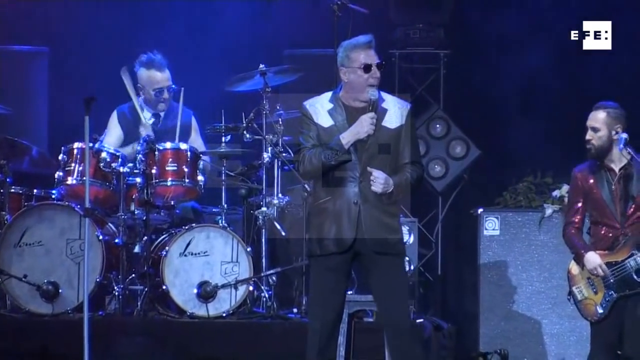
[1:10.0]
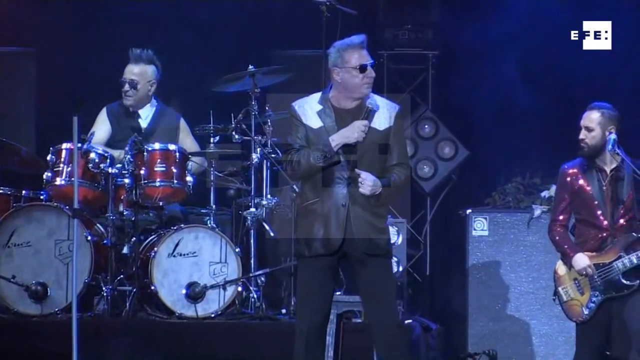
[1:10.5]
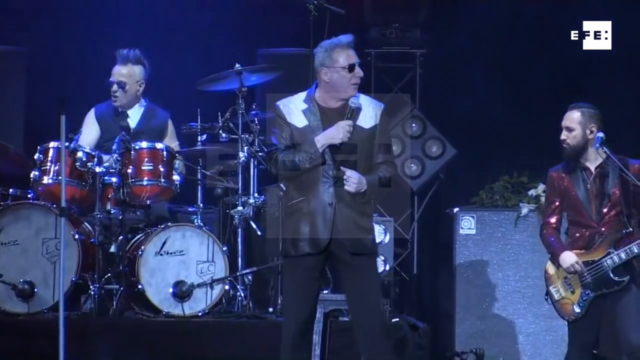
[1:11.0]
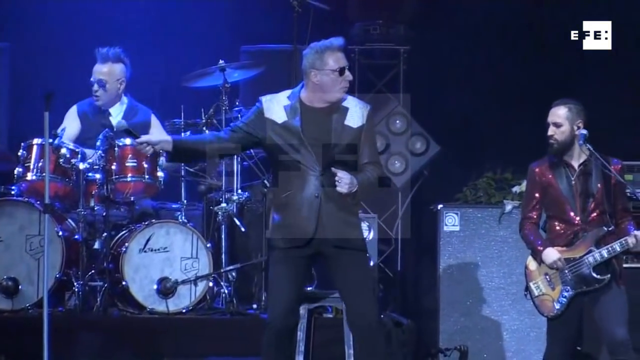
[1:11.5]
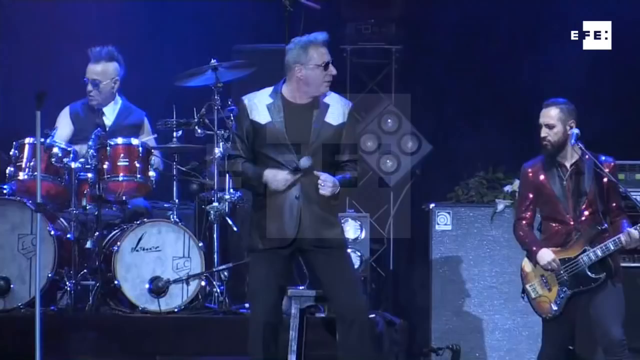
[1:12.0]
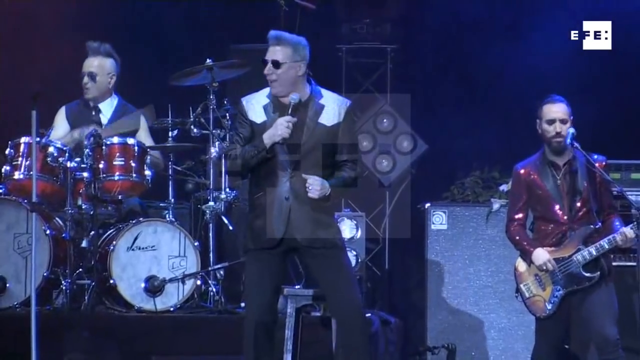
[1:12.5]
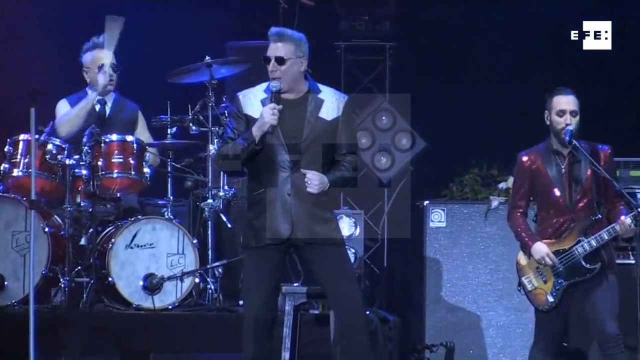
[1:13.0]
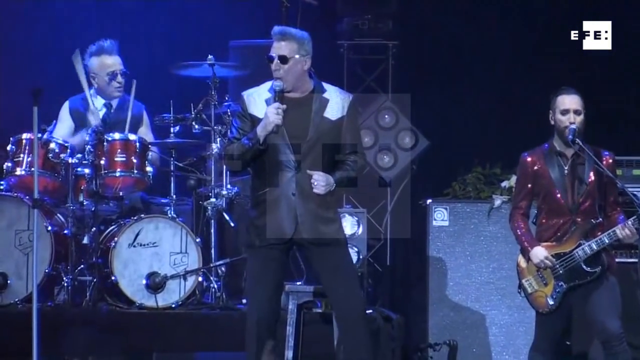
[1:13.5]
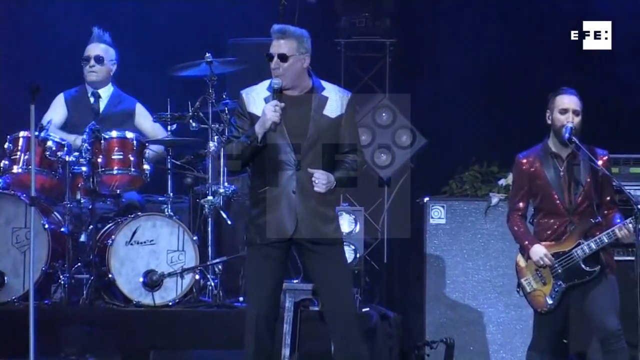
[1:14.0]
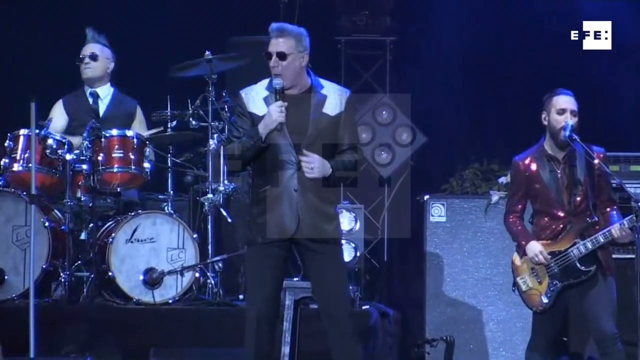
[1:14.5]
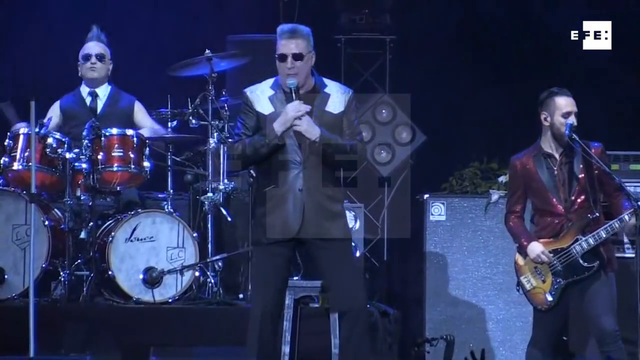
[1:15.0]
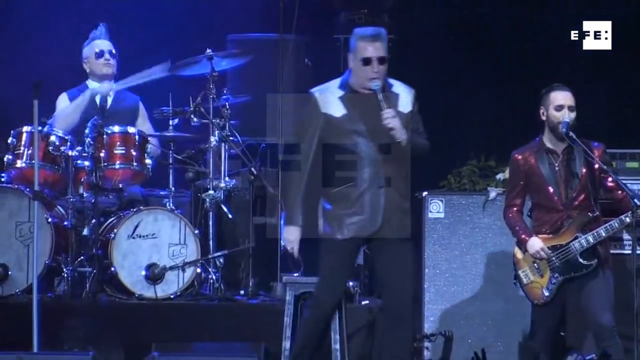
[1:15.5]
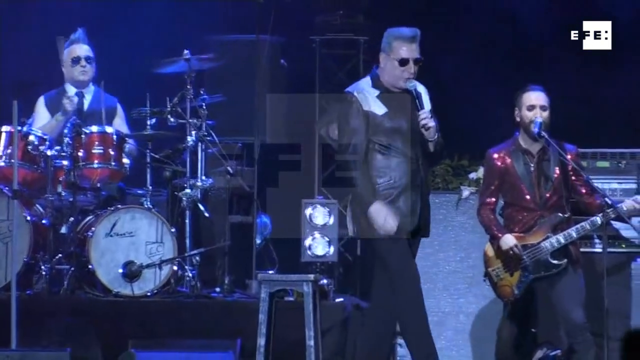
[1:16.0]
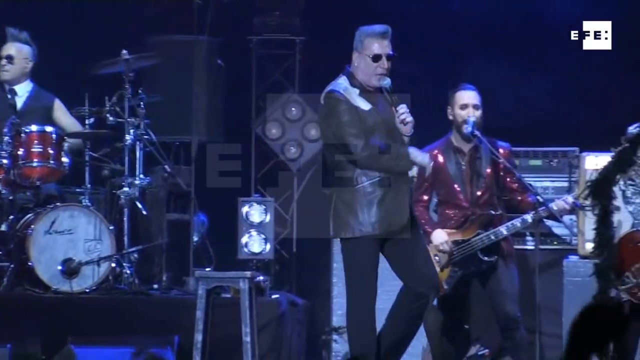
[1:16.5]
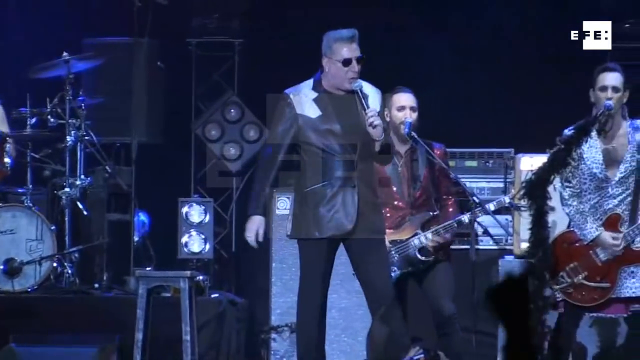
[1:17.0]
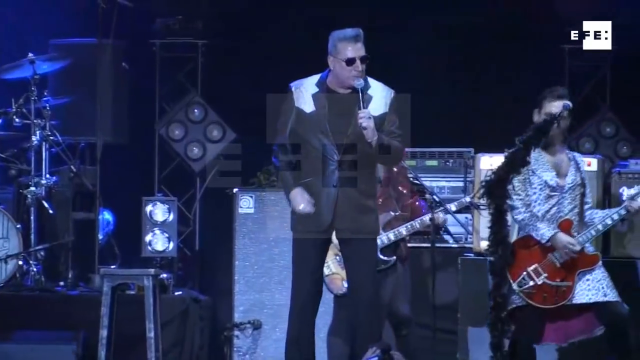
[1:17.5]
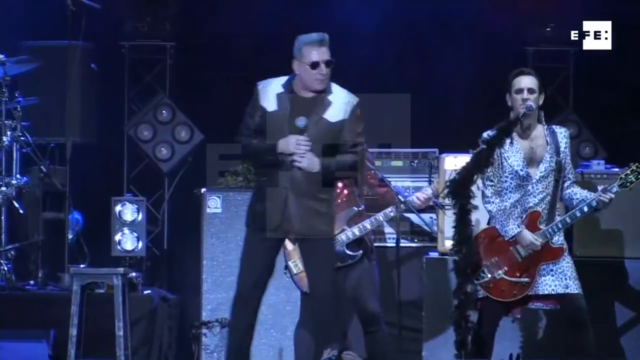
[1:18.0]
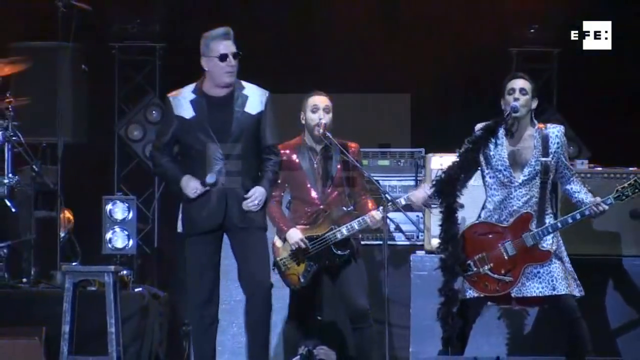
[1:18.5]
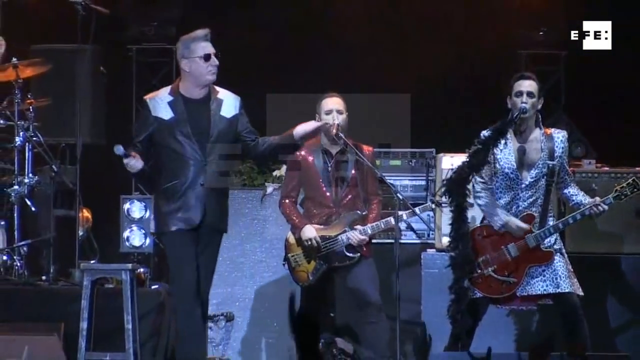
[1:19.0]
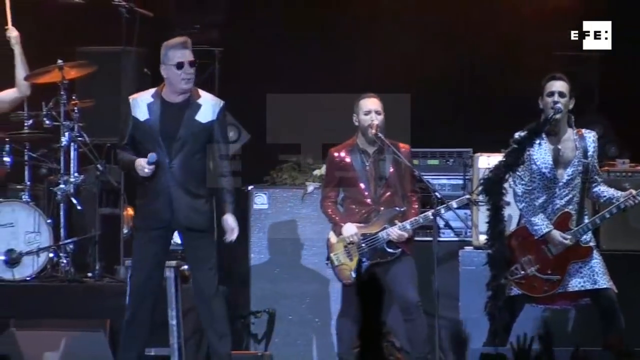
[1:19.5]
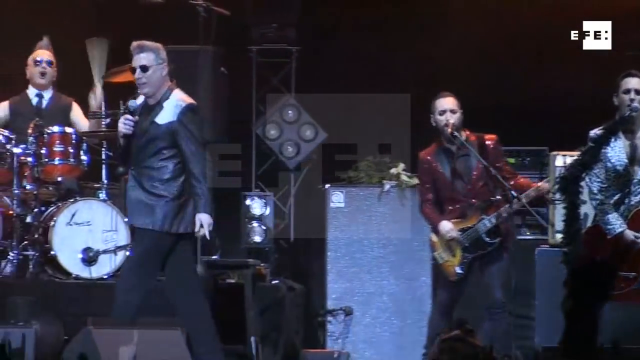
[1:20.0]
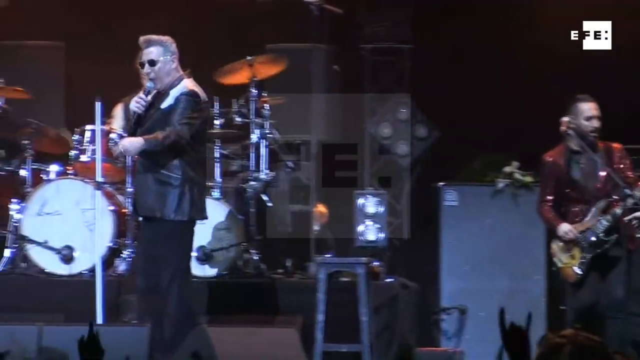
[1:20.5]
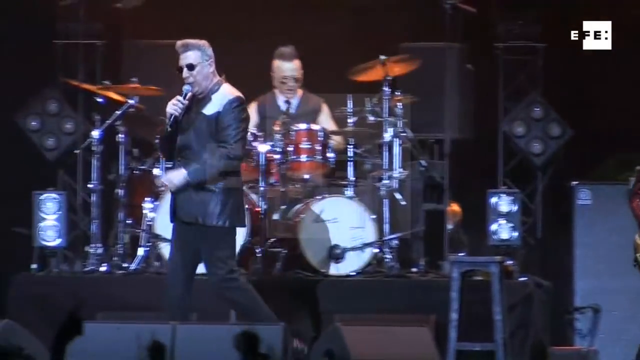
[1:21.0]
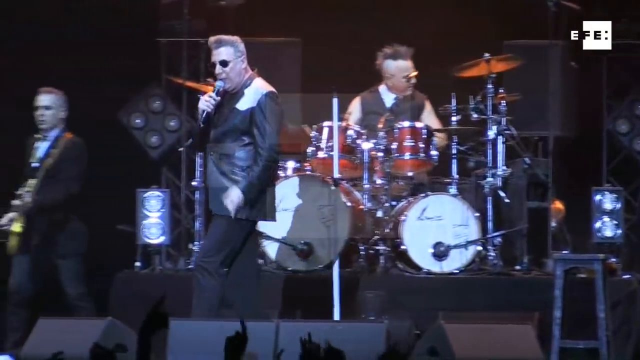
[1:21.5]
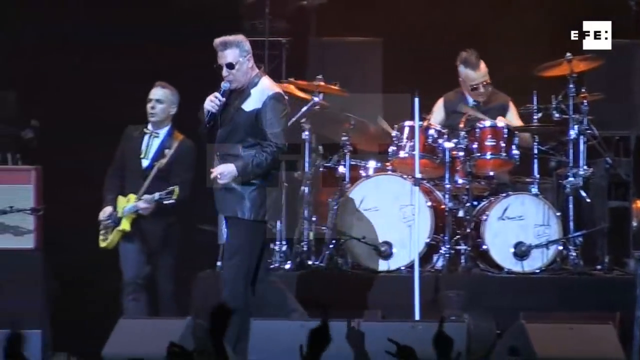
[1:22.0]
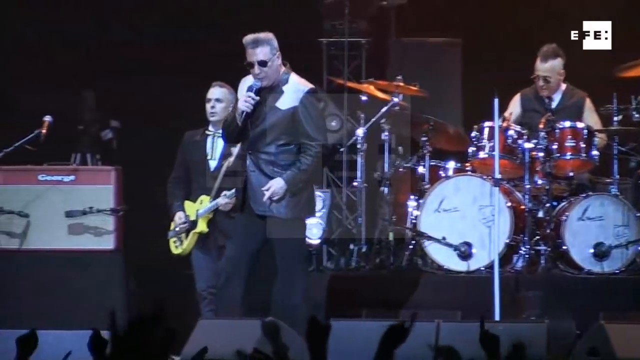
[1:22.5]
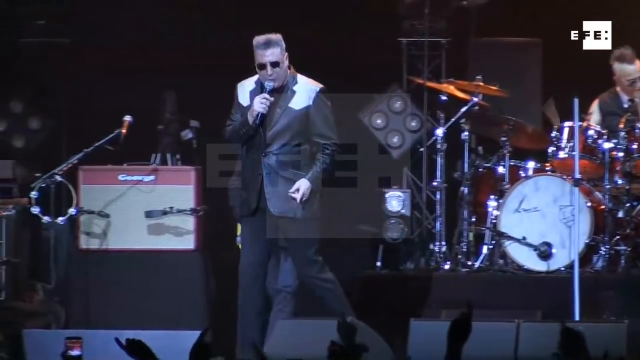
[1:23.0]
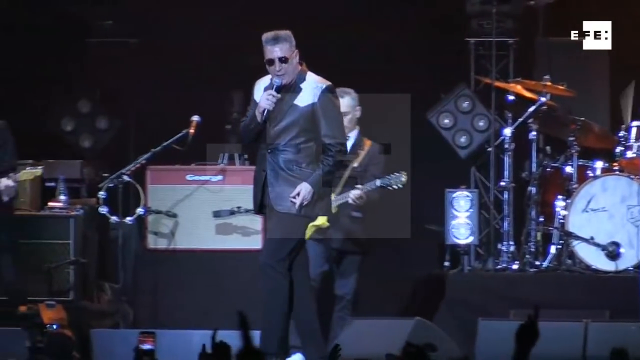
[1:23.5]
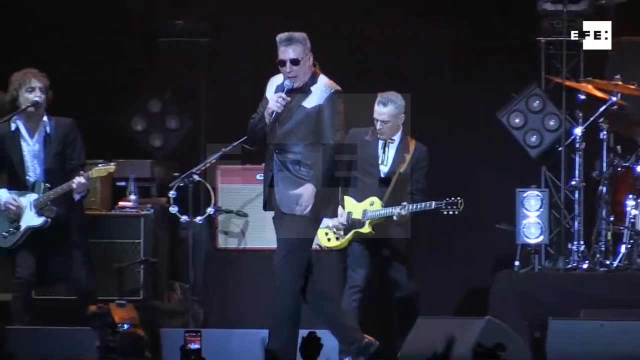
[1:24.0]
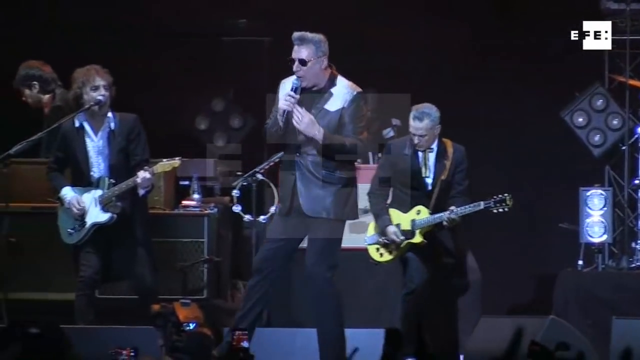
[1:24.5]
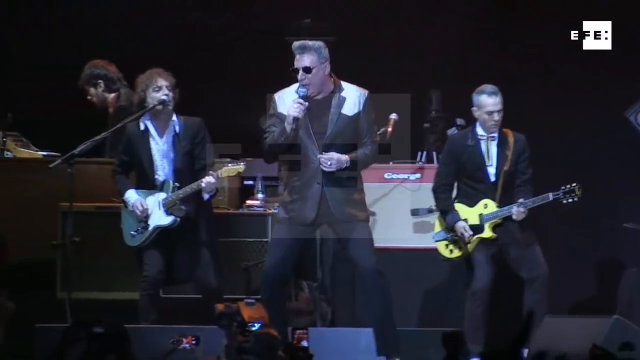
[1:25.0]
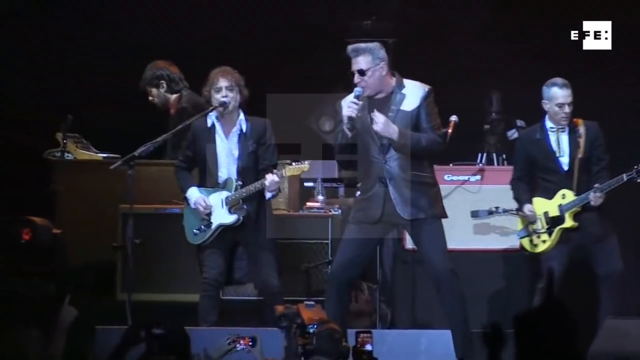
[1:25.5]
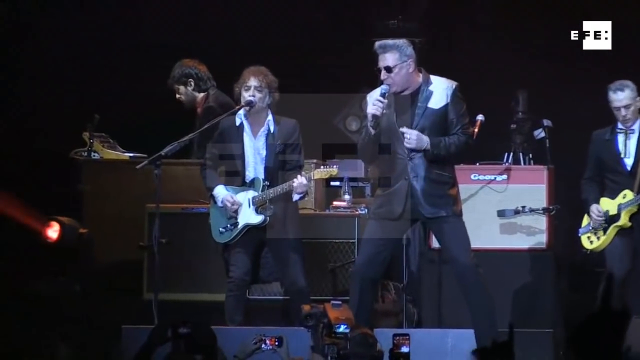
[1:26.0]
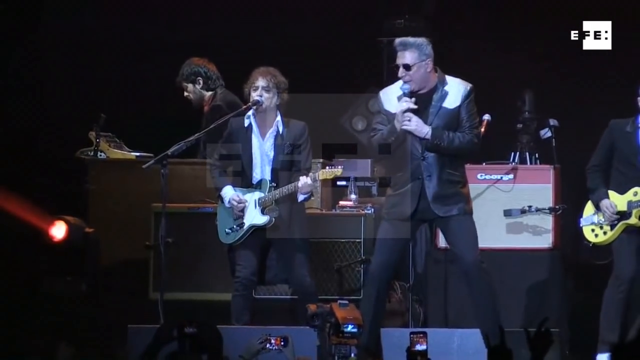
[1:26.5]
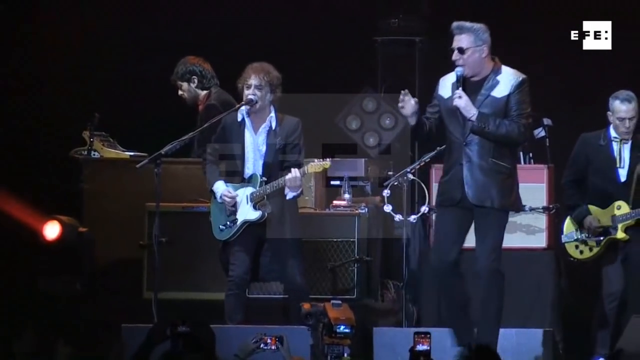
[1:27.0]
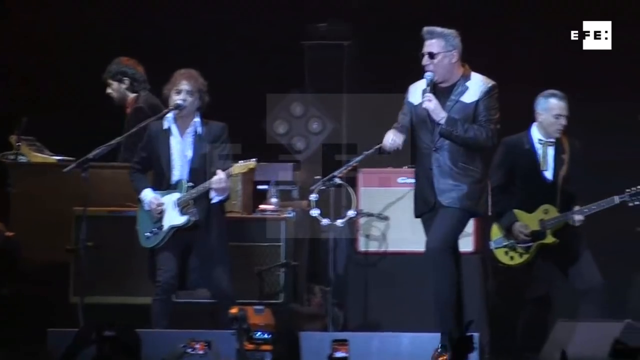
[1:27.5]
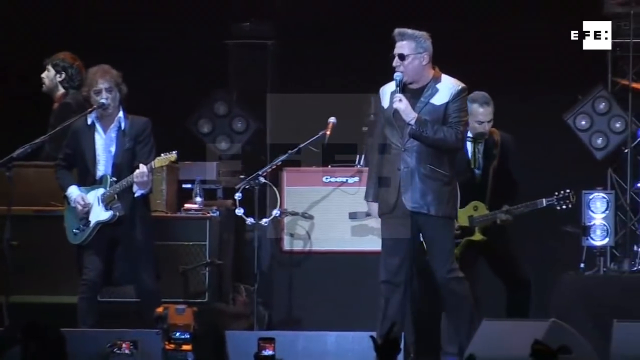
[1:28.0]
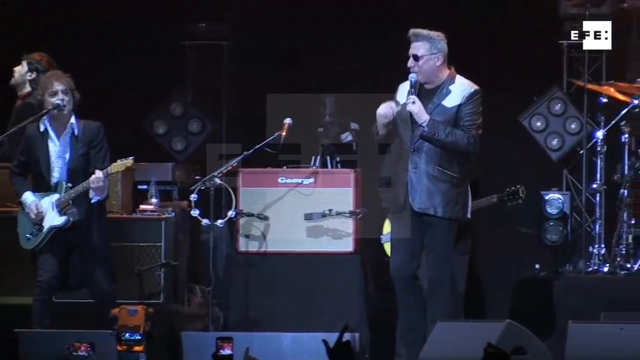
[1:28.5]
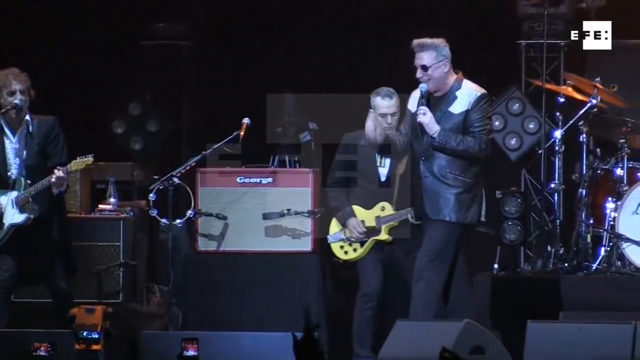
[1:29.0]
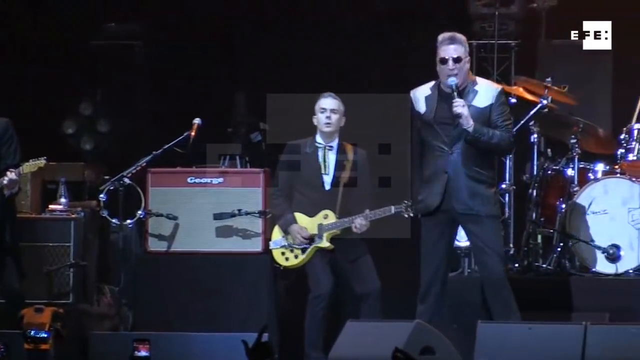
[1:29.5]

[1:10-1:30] In the middle of the stage is a small black platform, and on it is a red drum set whose two bass drum heads are white. The drummer wears a white collared shirt with a black vest over it and black sunglasses, and has spiky hair. In front of him the singer faces the camera, wearing a black suit jacket that looks like leather with white shoulder pads, and black pants. He turns to the right and starts walking, revealing a man in a white collared shirt and black suit jacket holding a yellow guitar, with gray hair. The camera keeps following the singer as he walks over, and another man is seen singing into another microphone. He wears a white button-up collared shirt with the top buttons undone and a black suit jacket, and holds a black and white guitar. Behind him, a man is behind a wooden piano with a synthesizer sitting on top of it.